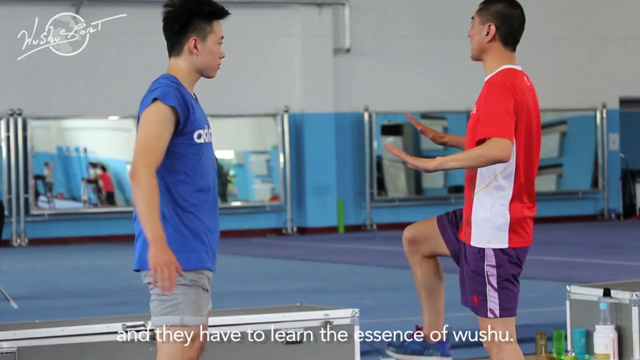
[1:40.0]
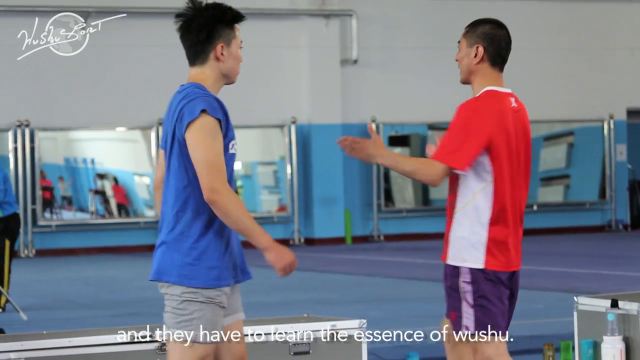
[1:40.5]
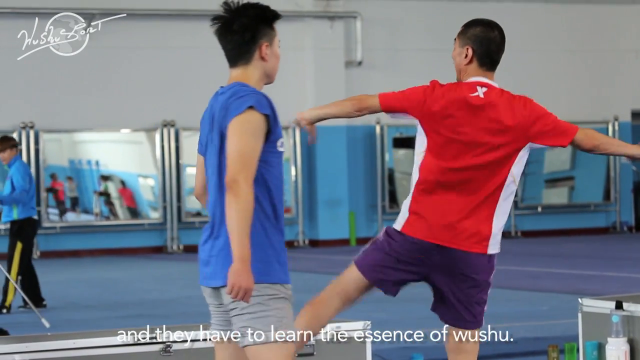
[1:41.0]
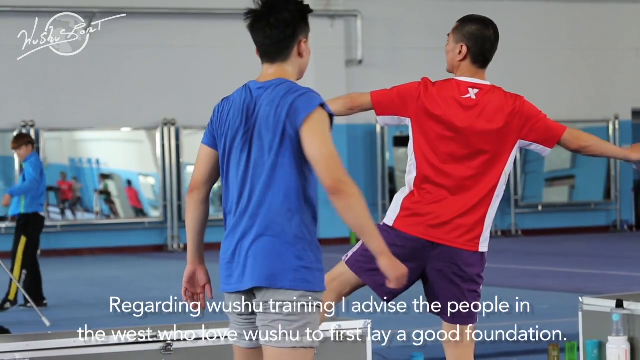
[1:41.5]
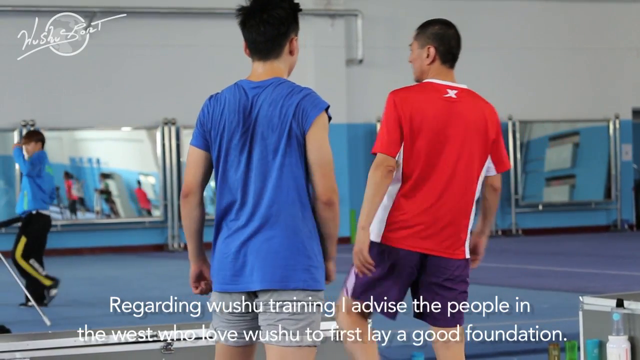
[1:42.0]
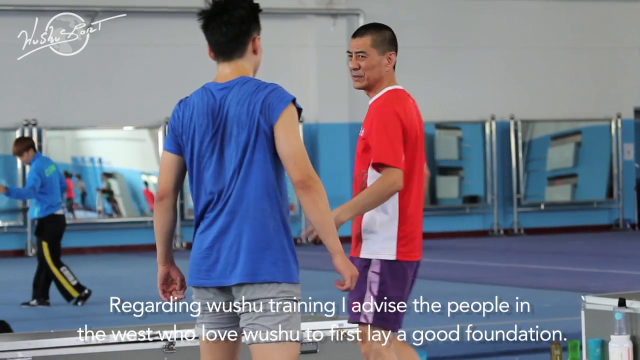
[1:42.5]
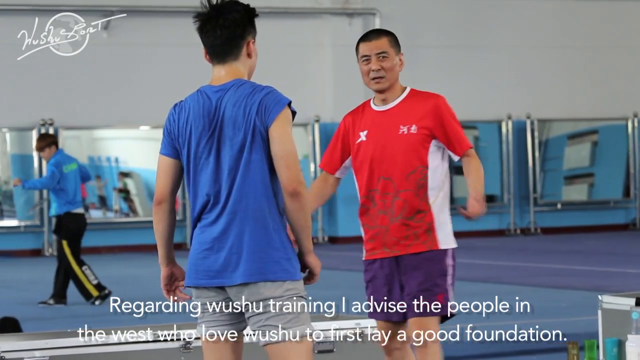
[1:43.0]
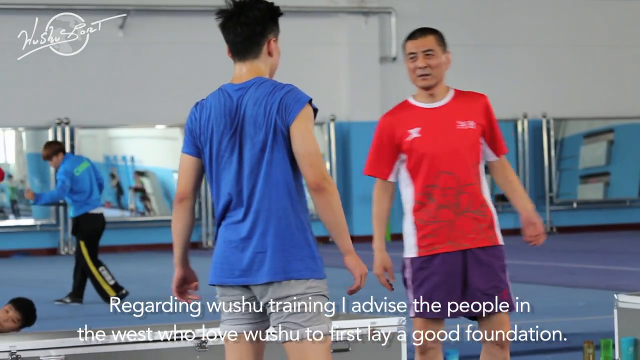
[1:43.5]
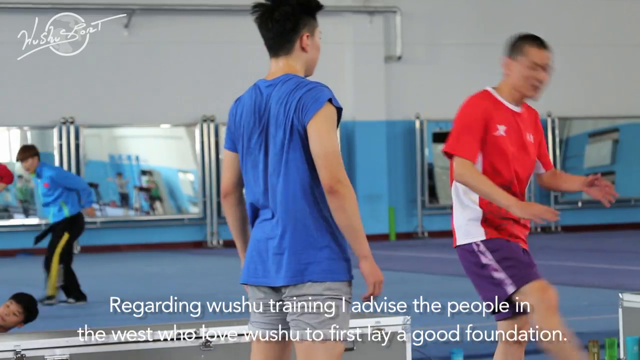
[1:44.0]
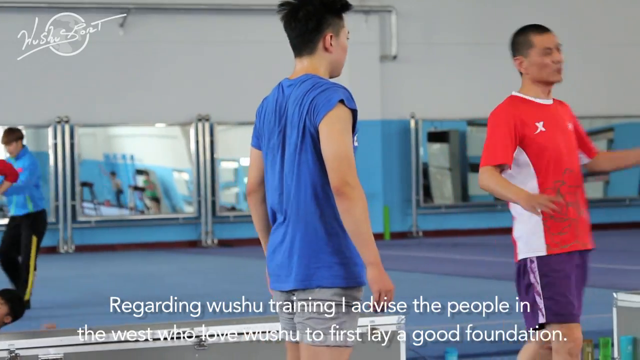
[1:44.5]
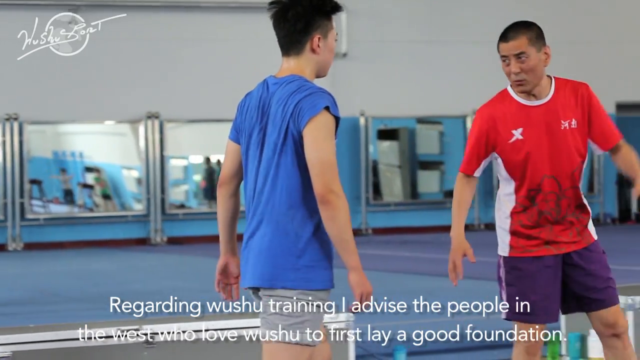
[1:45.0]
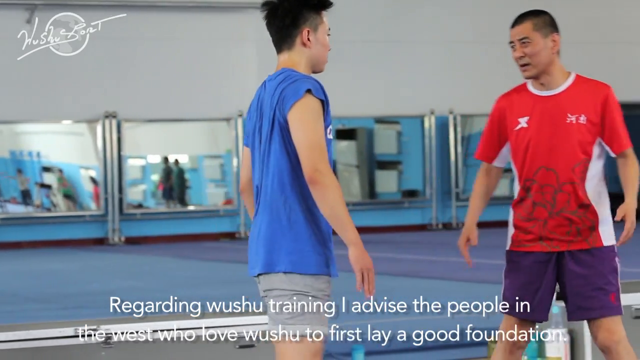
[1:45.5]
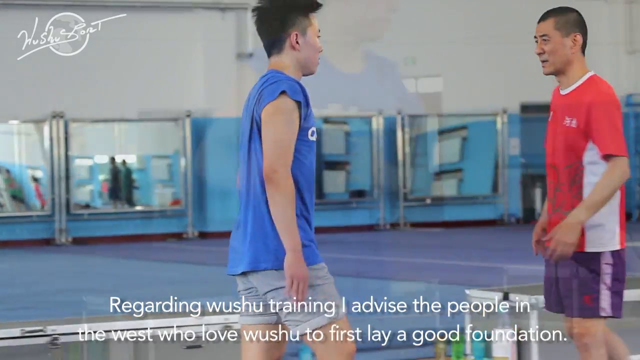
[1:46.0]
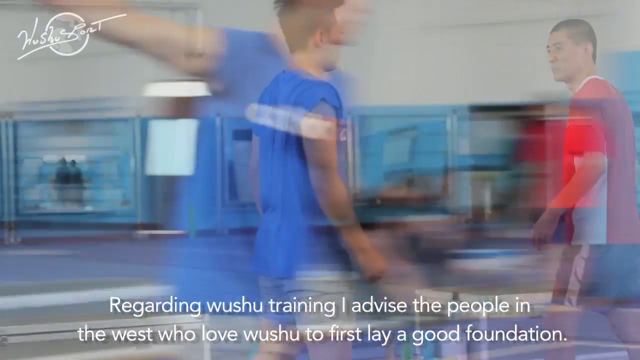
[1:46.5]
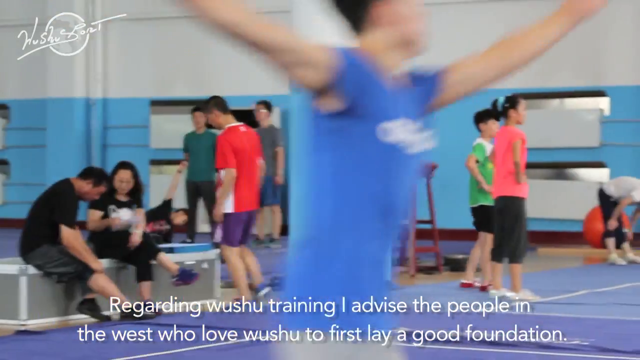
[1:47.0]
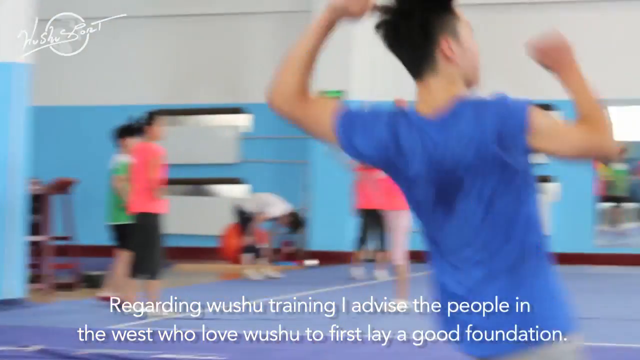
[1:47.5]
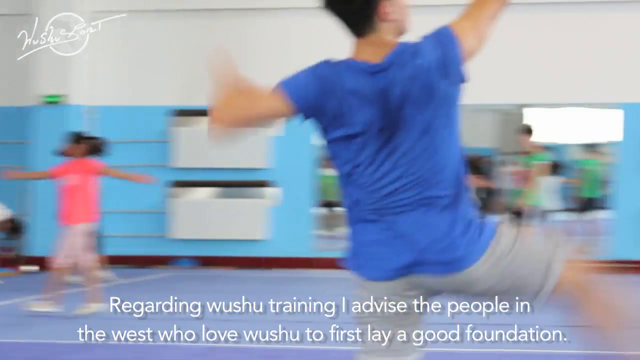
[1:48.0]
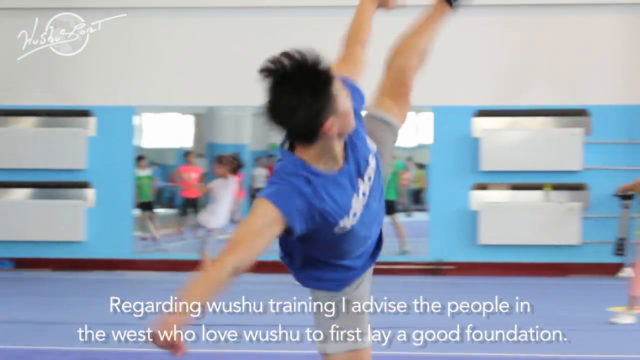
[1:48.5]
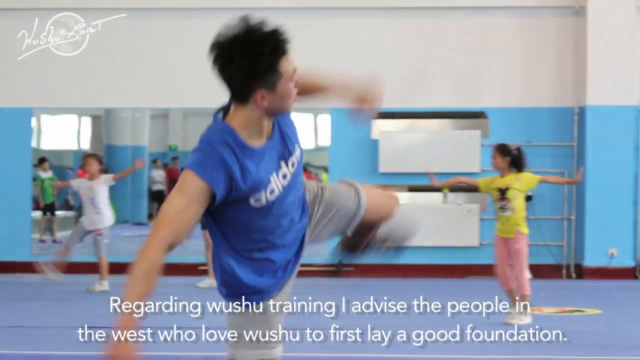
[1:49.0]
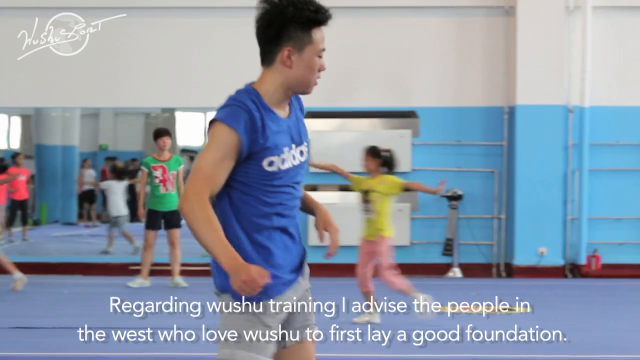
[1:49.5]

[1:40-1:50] A large room has walls that are white on the top half and blue on the bottom half, with large mirrors side by side along the bottom so the walls are basically covered with mirrors. The floor is made of purple or blue mats run up against each other so the whole floor is one mat. A Chinese man with black hair, wearing a red shirt with white stripes down the sides and purple shorts, kicks his leg out and sticks his arms up. To his left, a guy with black hair in a short-sleeved blue shirt and gray shorts watches him. Captions along the bottom of the screen read: "Regarding WUSHU training, I advise the people in the West who have WUSHU to first lay a good foundation."